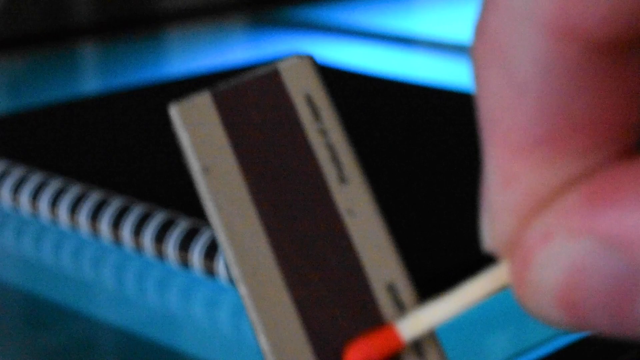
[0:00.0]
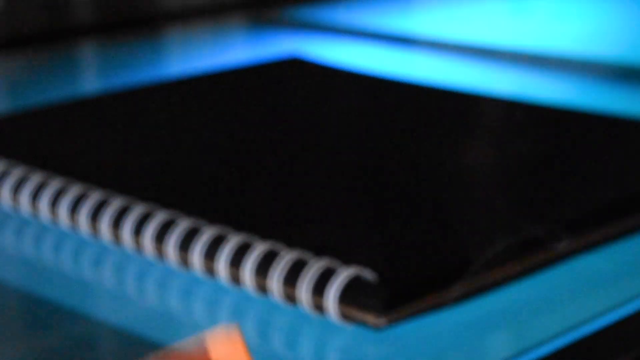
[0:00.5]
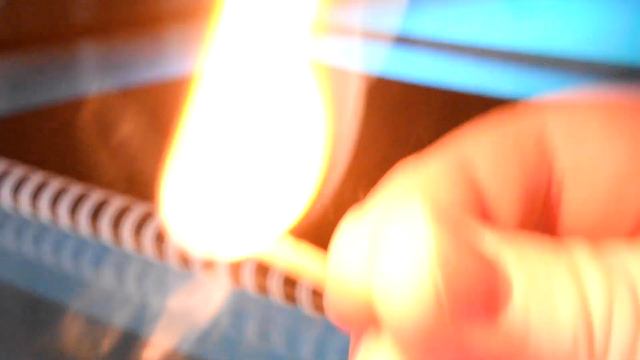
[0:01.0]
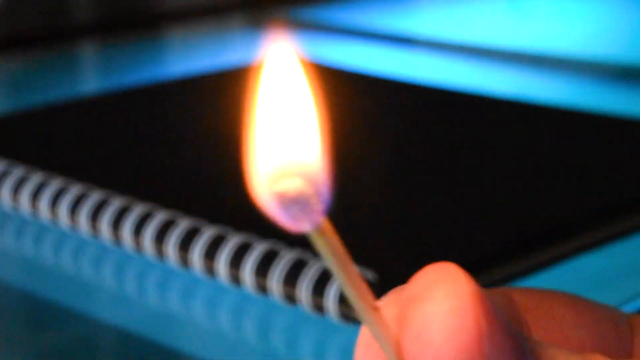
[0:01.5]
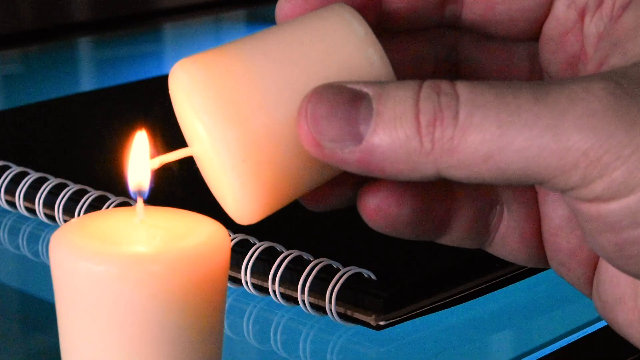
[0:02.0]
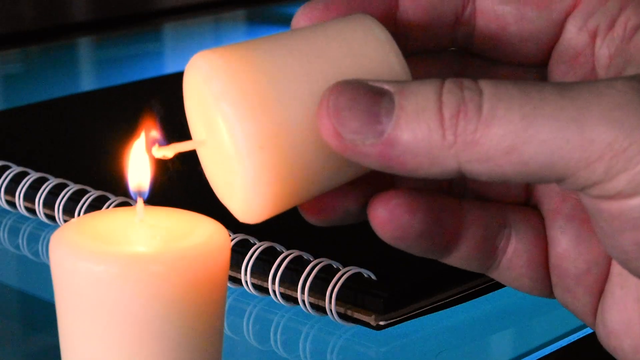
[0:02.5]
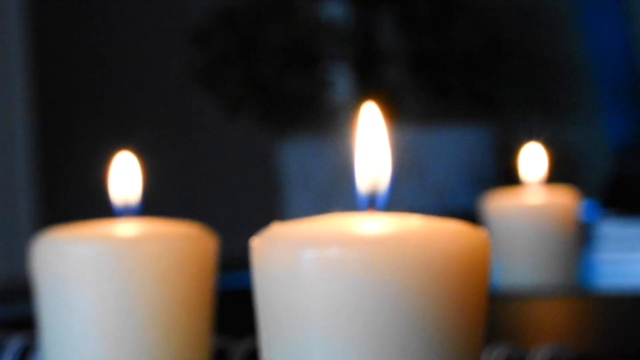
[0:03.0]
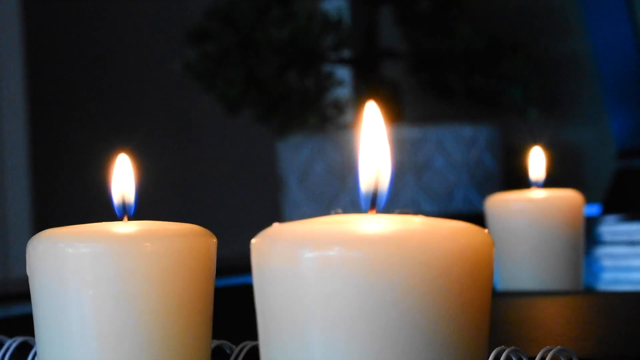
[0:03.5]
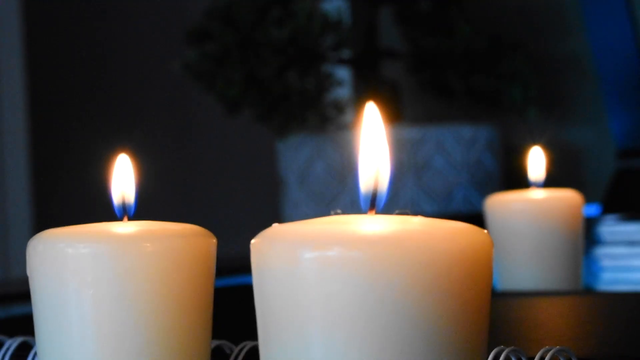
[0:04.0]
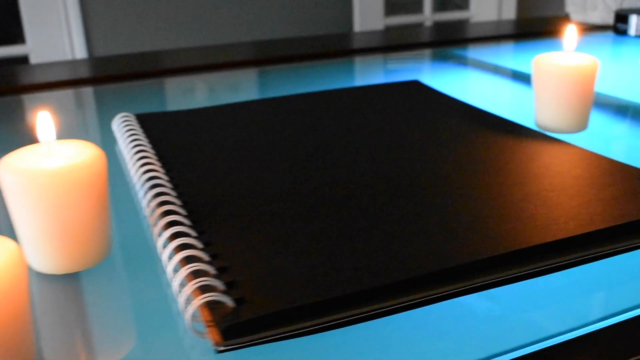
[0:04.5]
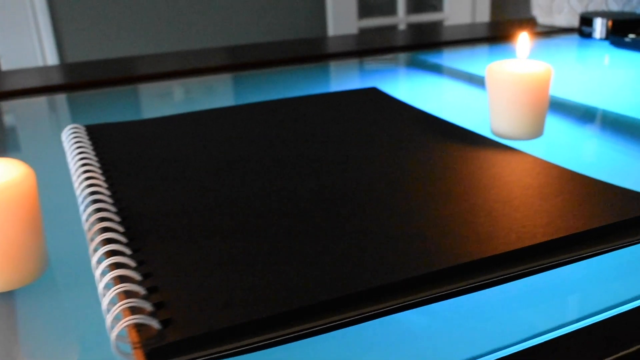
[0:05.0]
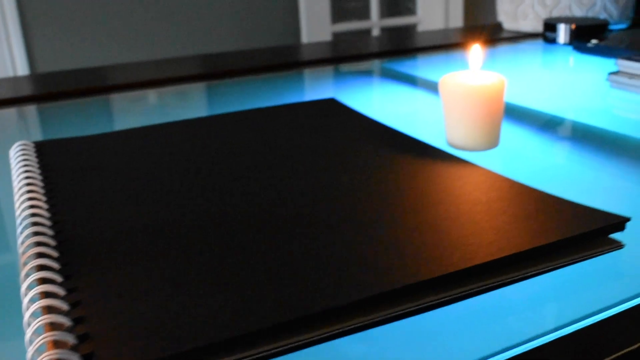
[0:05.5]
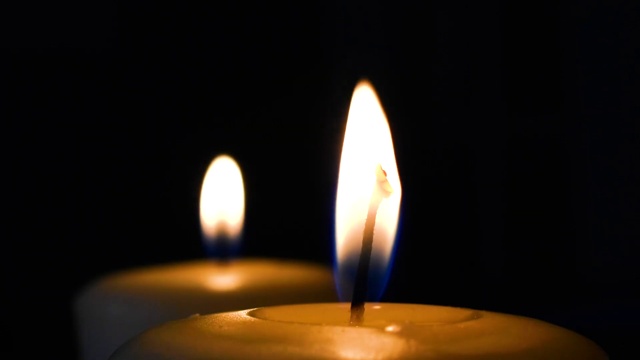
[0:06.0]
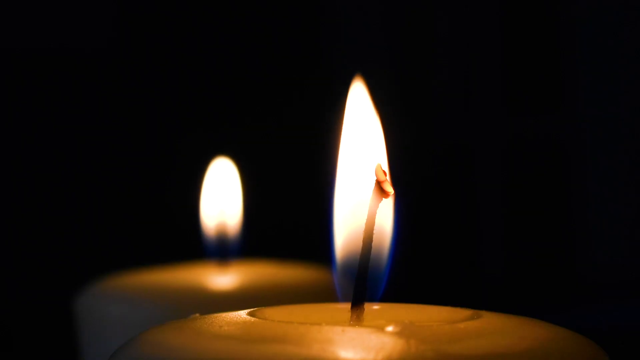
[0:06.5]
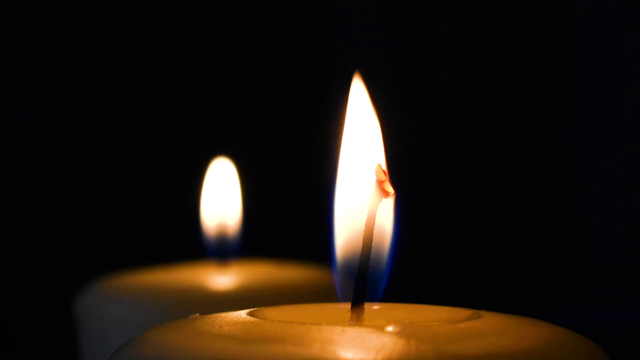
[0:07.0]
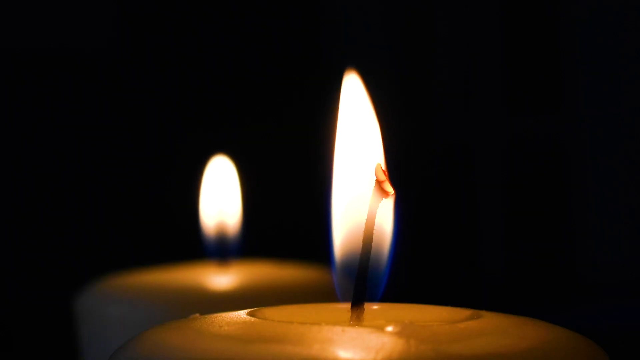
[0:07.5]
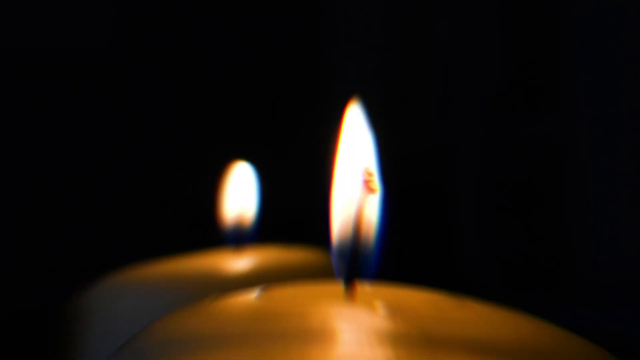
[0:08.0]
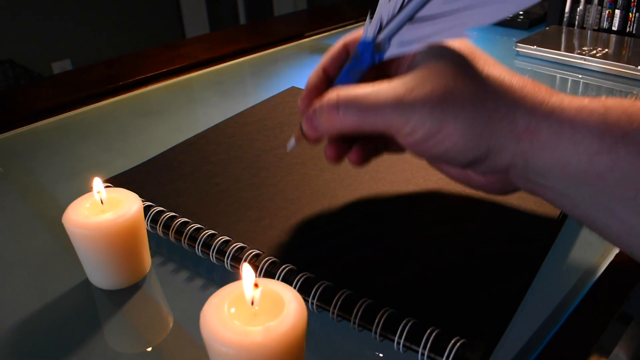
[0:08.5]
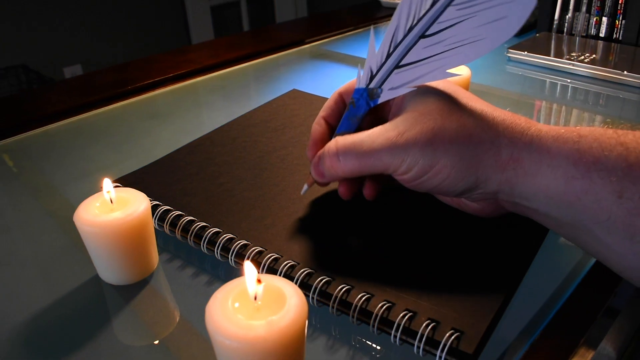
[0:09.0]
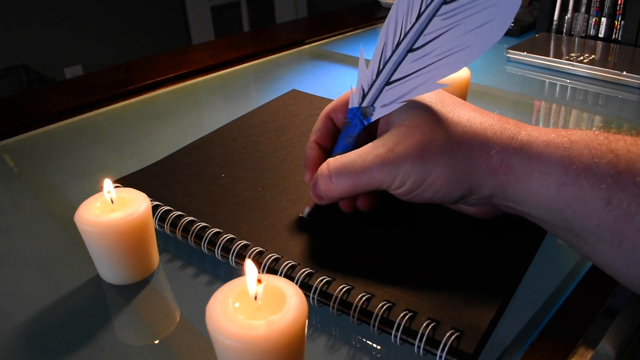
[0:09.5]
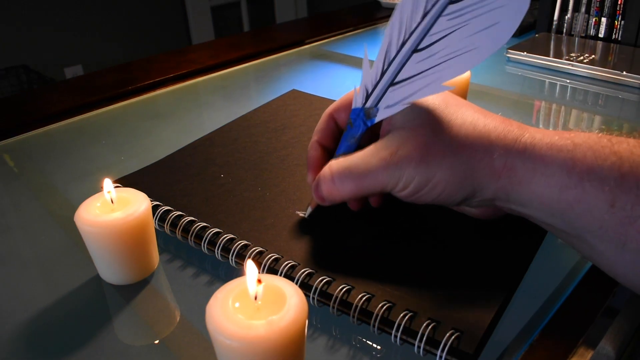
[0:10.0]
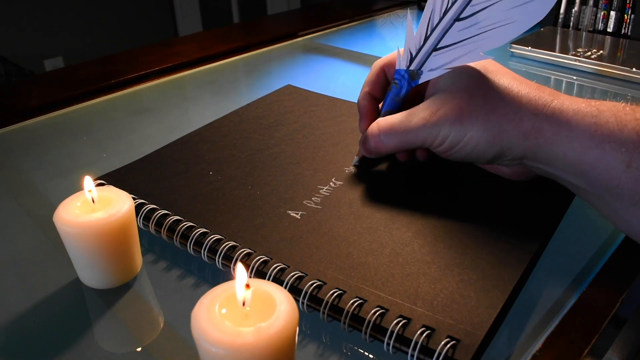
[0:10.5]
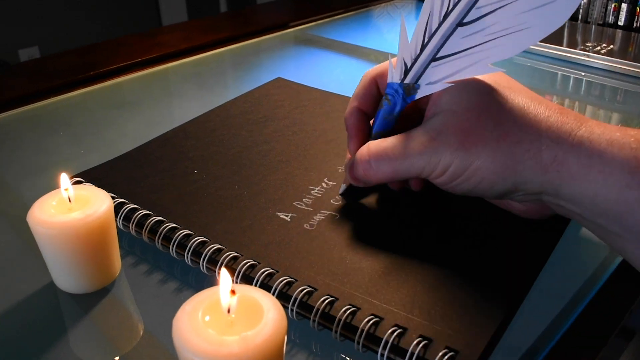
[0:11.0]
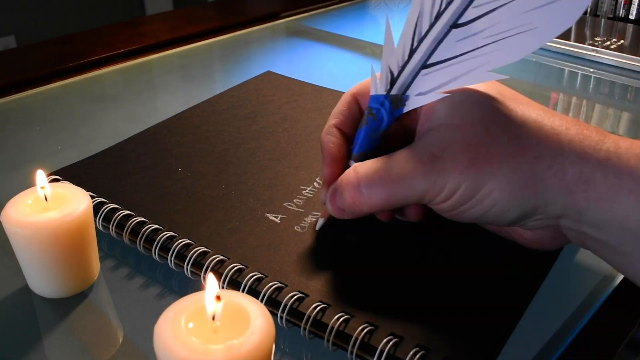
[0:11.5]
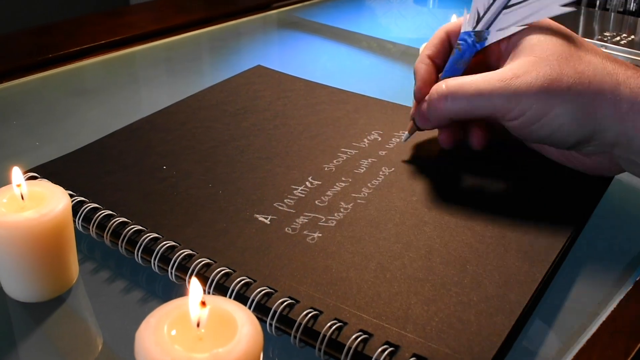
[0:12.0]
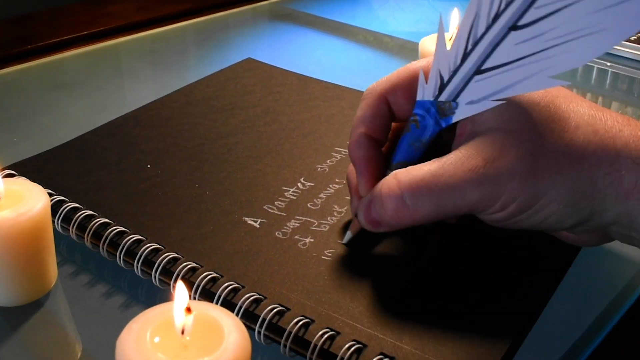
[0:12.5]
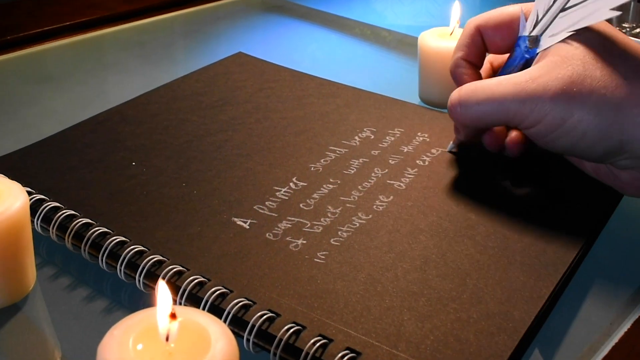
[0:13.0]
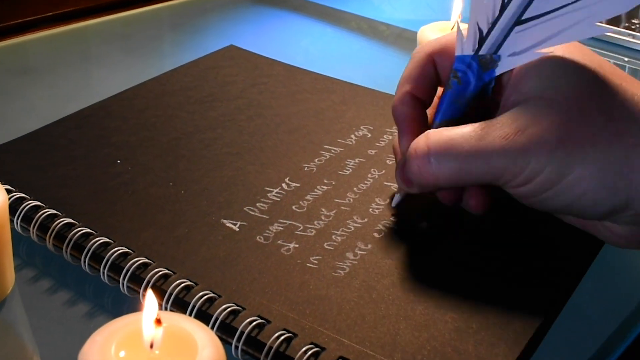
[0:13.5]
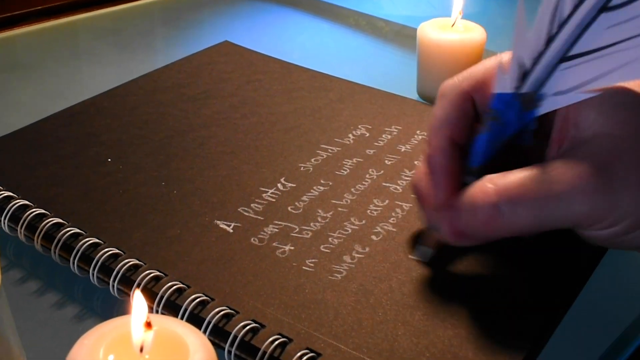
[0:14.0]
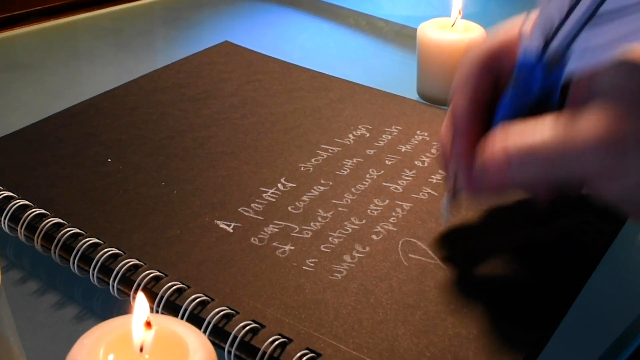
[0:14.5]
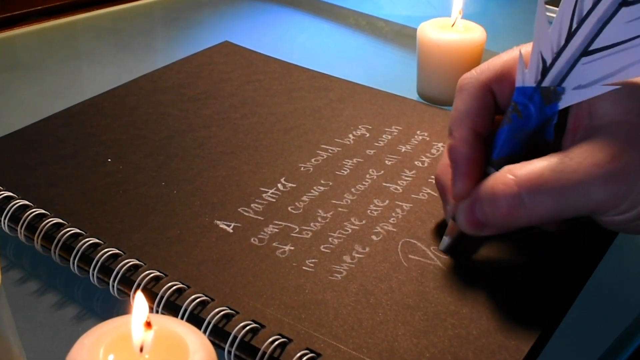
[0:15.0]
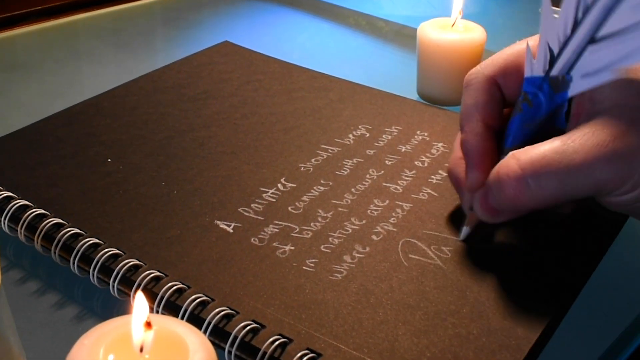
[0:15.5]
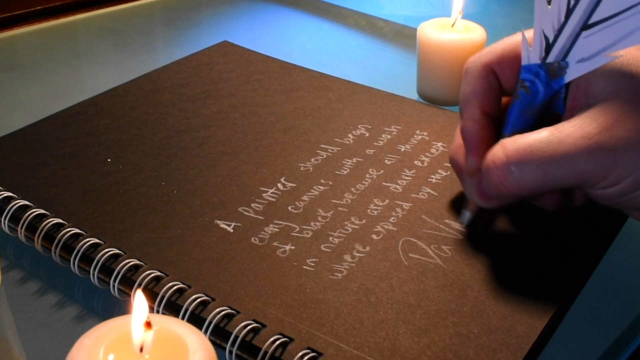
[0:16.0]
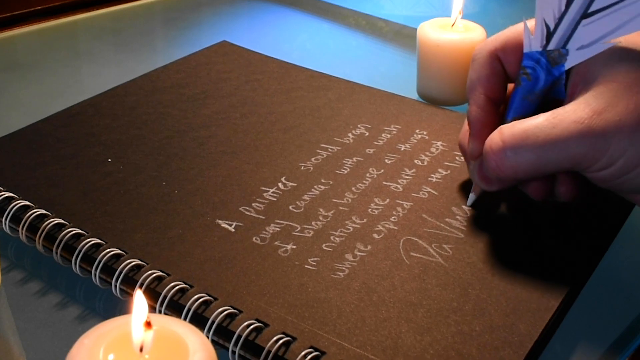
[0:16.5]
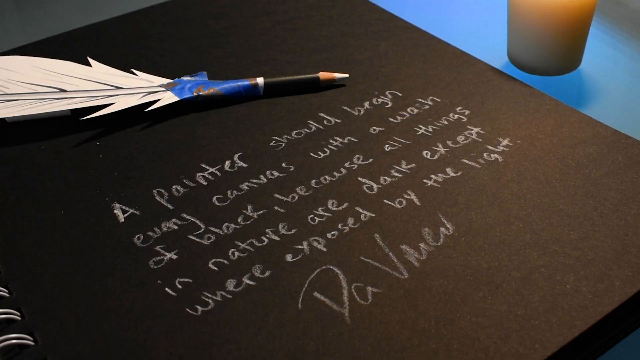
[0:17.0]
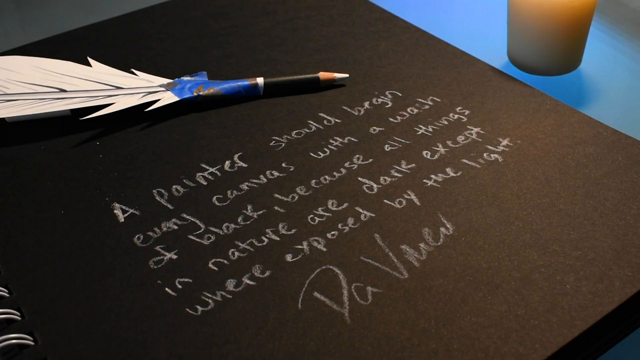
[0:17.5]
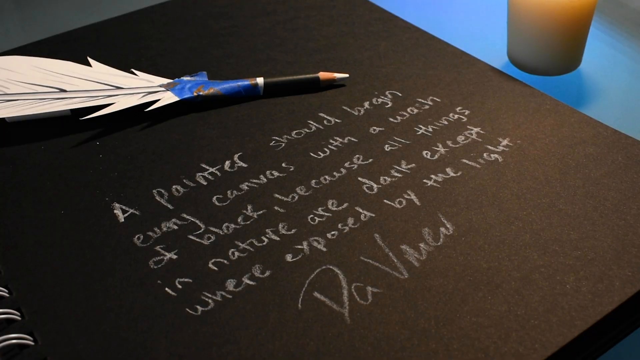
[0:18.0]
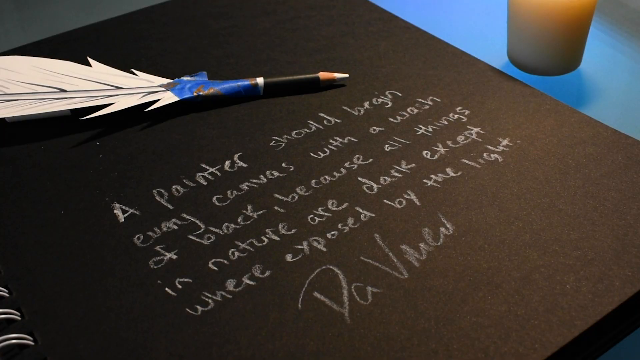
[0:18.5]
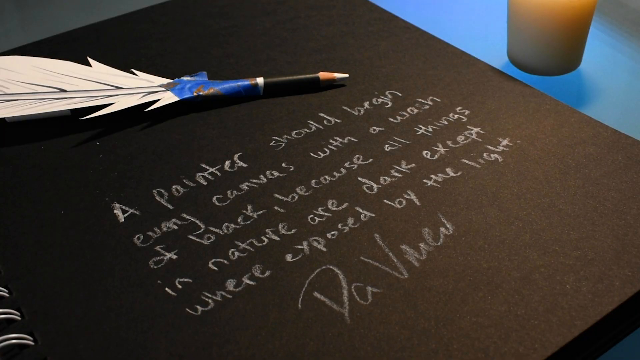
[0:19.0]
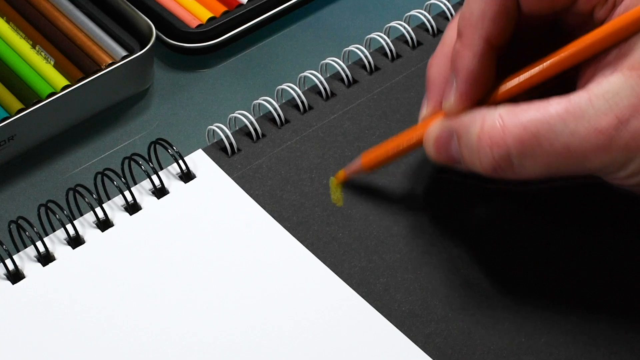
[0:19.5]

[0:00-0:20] Three candles are visible, and a man holds a matchbox in one hand along with a matchstick; a black book is on the table. The man lights the matchstick and lights the three candles, then surrounds the book on the table with them. He picks up a feather pen and starts writing on the cover of the book; the writing is in white. He also has a colouring pencil in hand, and later an orange pencil. He seems to be in an office of some sort, and there is a glass desk.